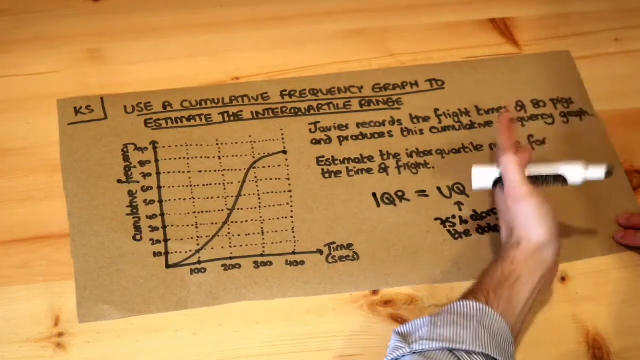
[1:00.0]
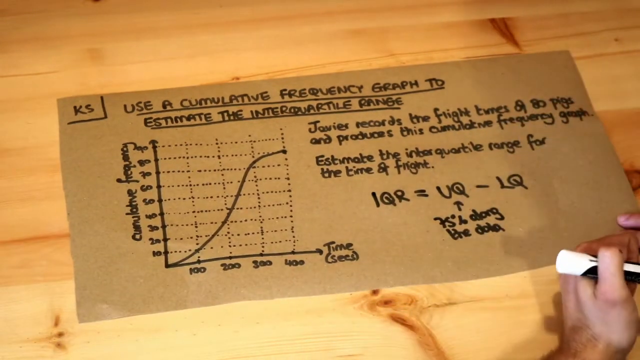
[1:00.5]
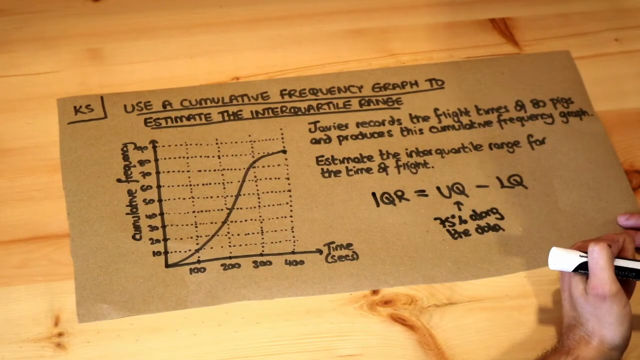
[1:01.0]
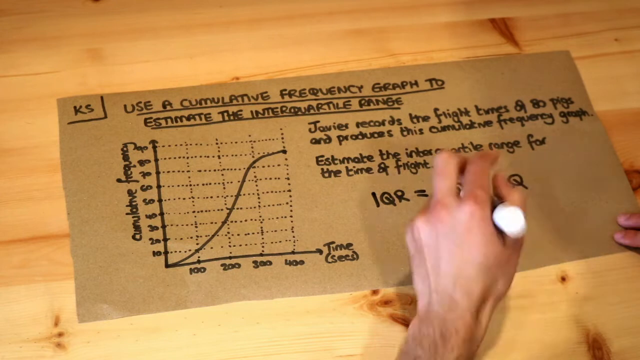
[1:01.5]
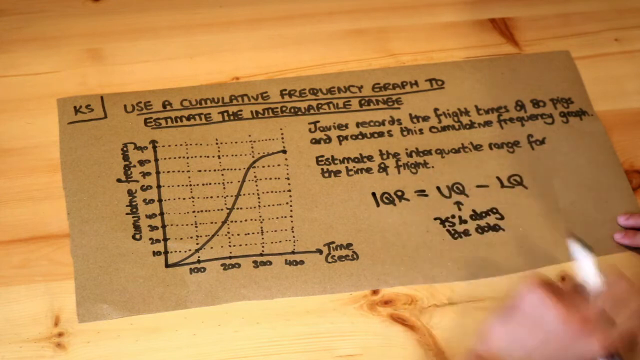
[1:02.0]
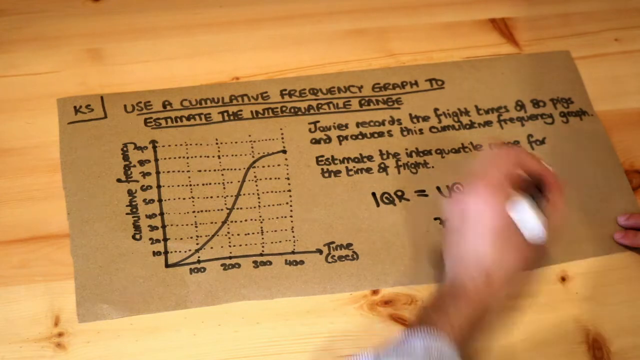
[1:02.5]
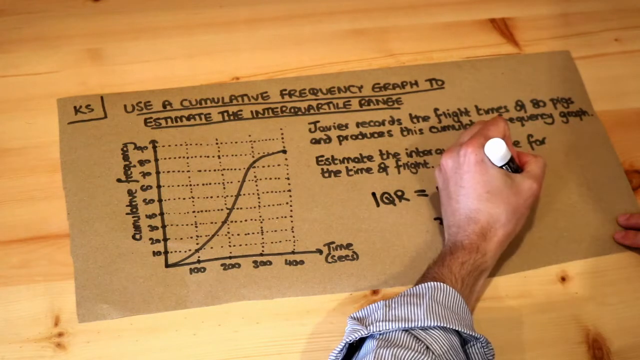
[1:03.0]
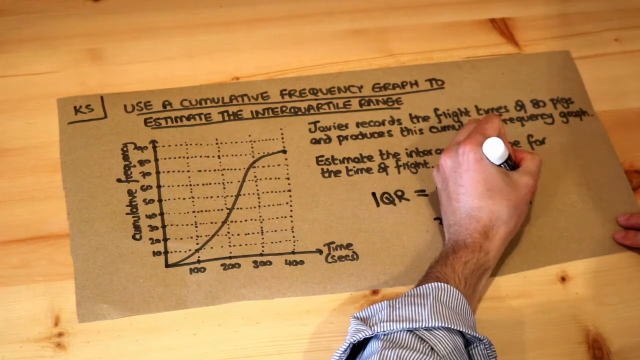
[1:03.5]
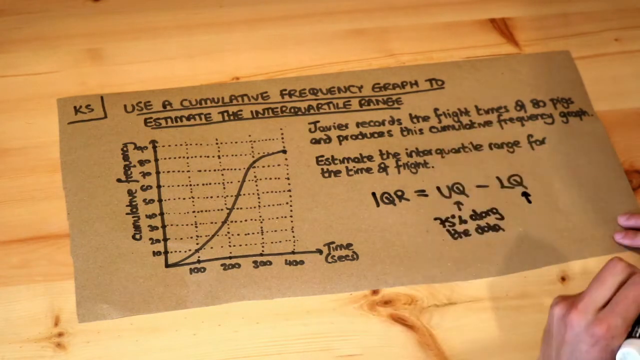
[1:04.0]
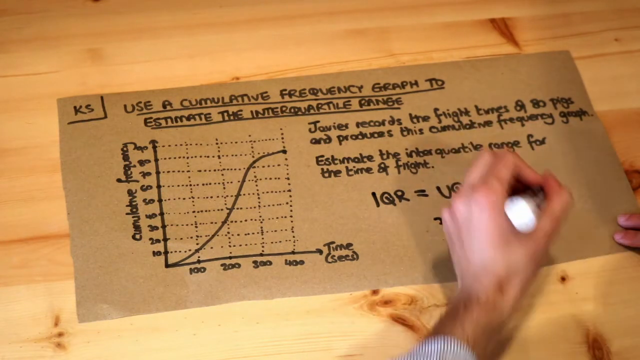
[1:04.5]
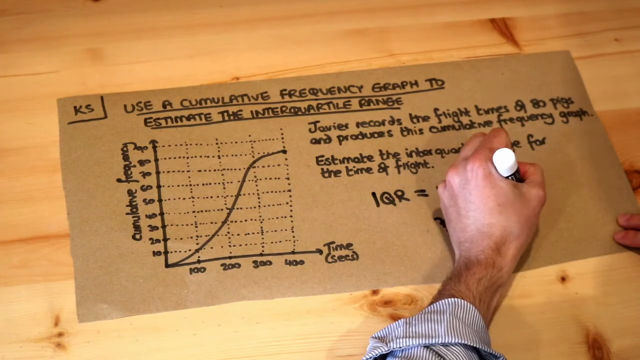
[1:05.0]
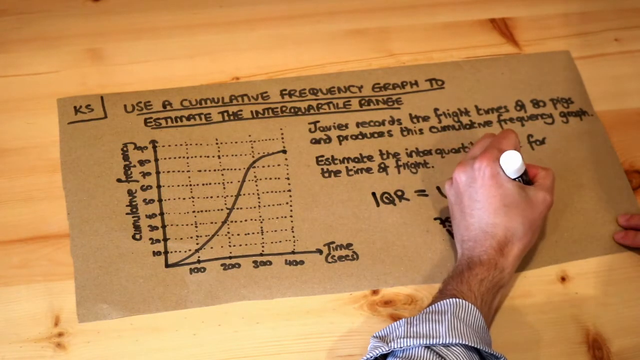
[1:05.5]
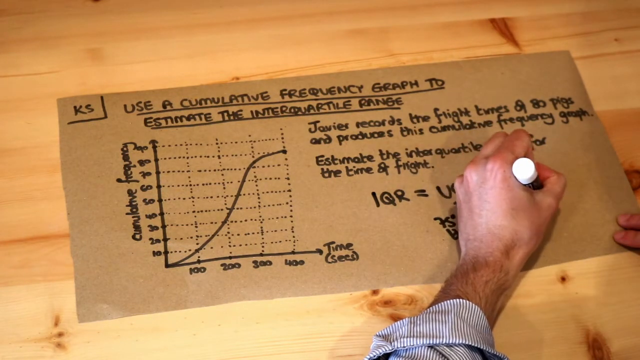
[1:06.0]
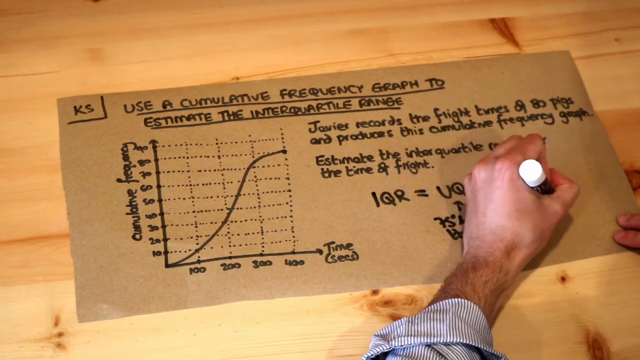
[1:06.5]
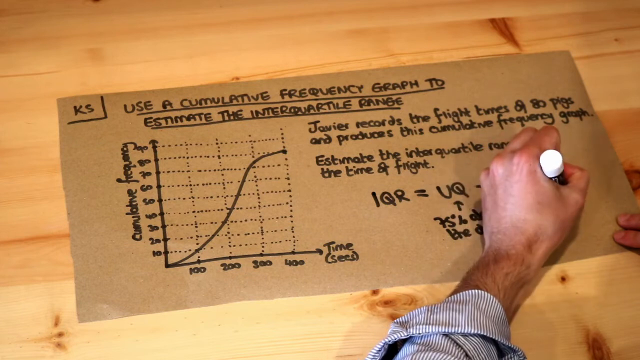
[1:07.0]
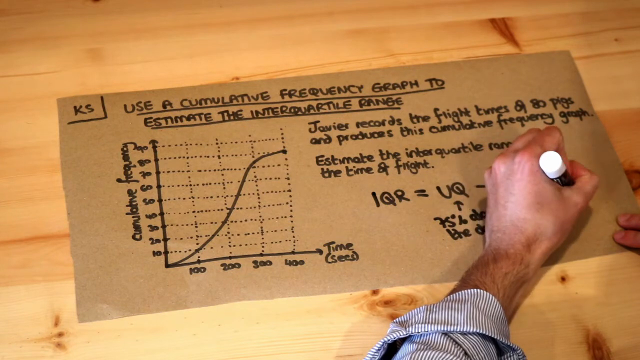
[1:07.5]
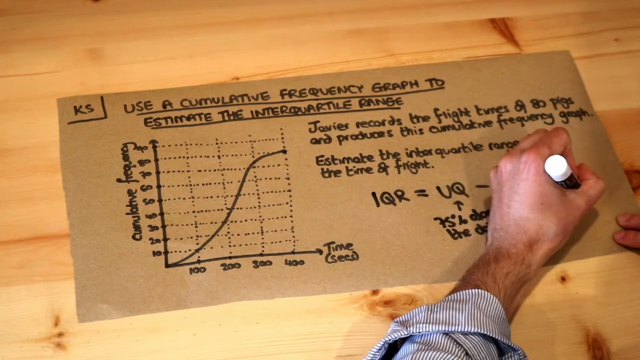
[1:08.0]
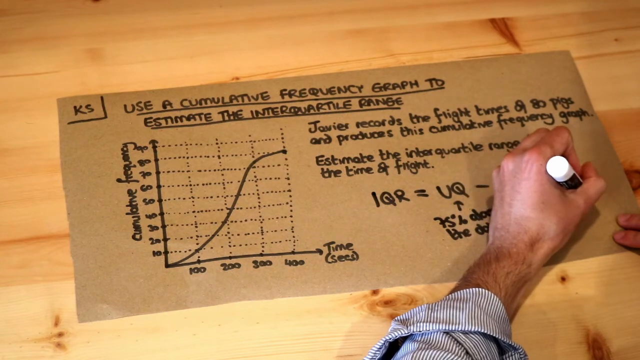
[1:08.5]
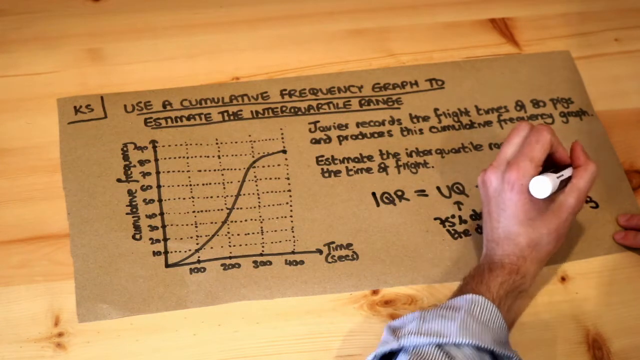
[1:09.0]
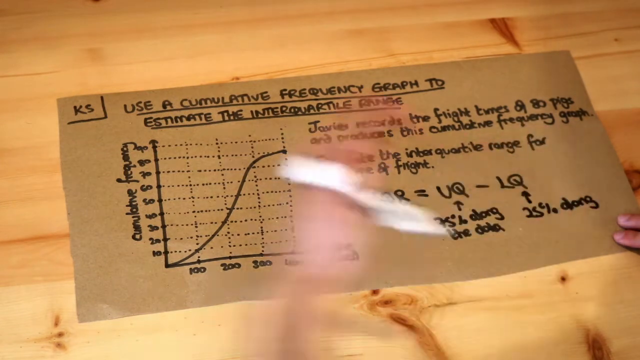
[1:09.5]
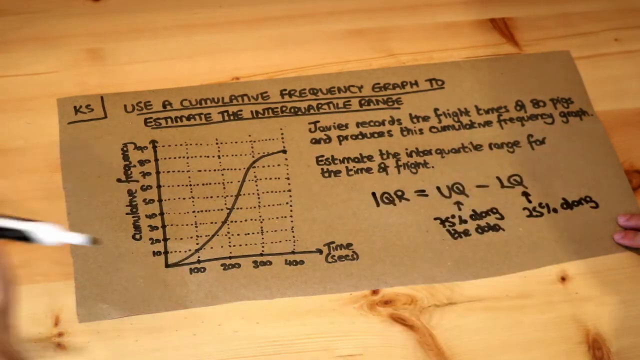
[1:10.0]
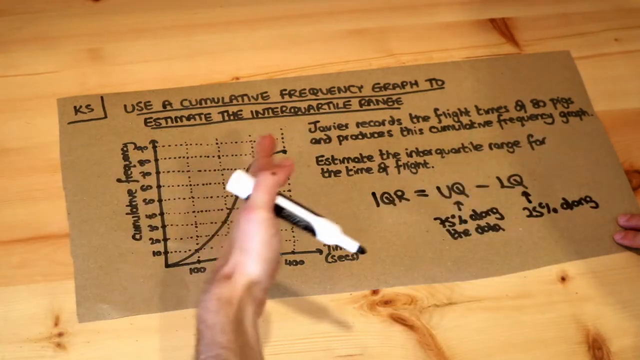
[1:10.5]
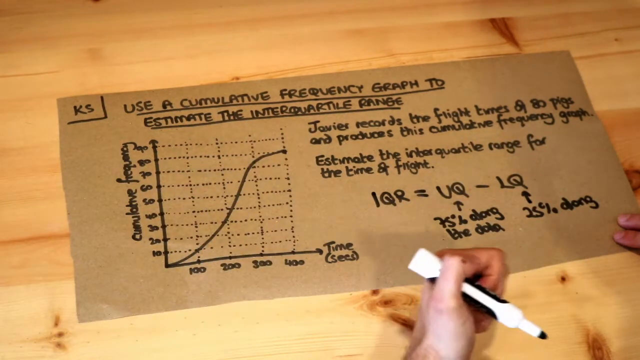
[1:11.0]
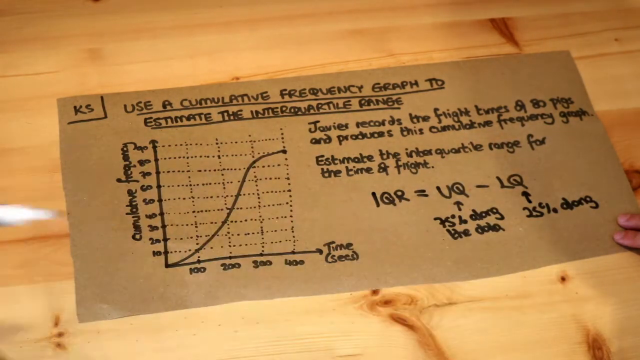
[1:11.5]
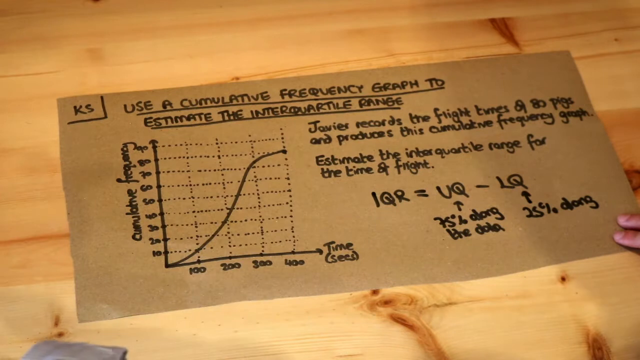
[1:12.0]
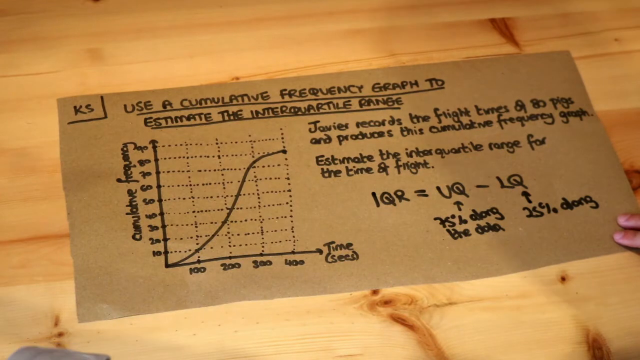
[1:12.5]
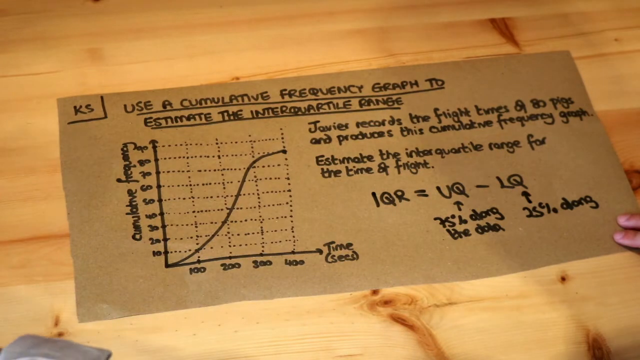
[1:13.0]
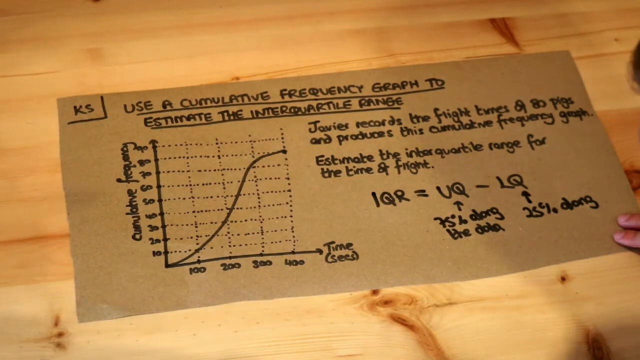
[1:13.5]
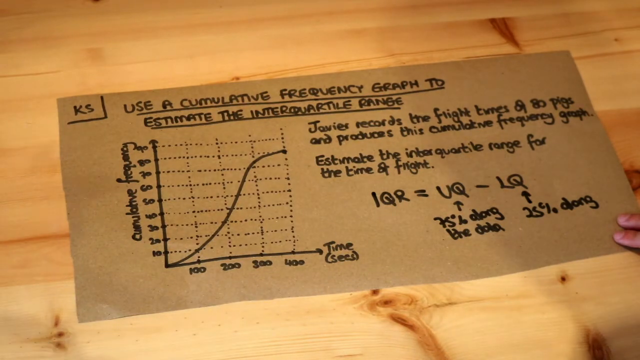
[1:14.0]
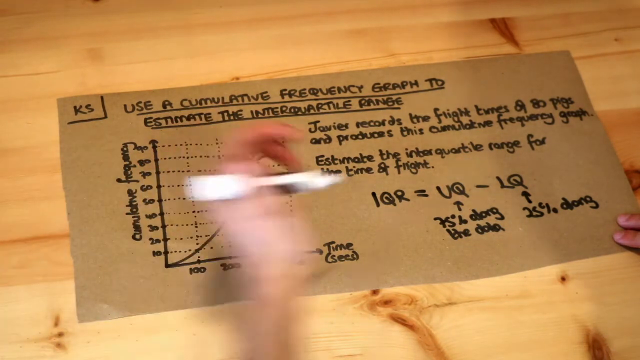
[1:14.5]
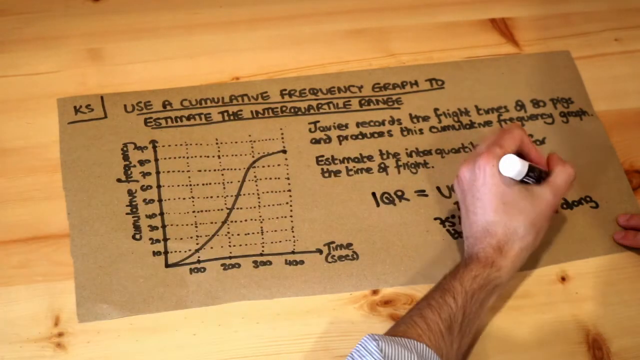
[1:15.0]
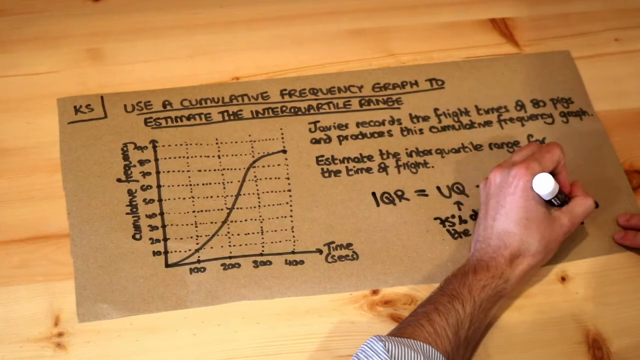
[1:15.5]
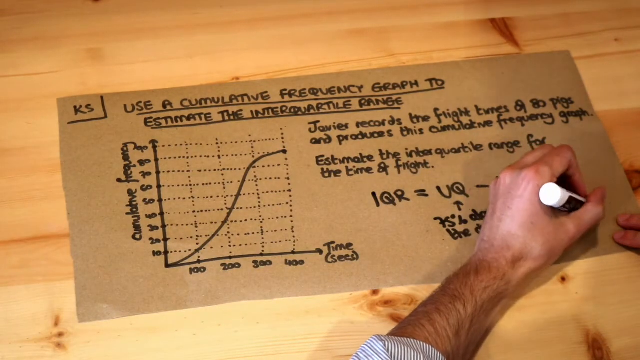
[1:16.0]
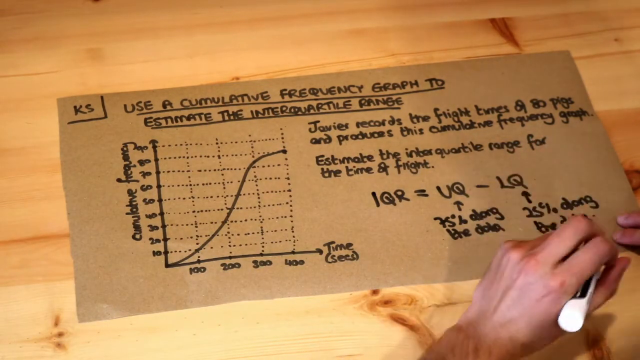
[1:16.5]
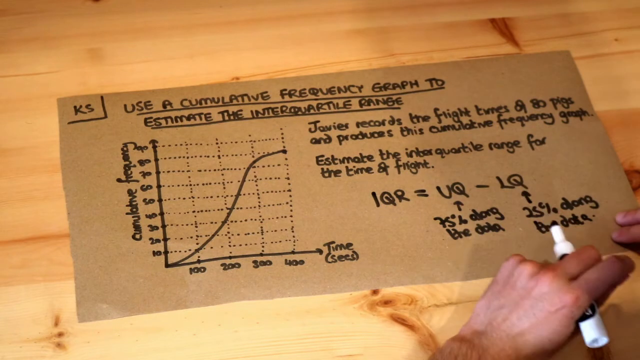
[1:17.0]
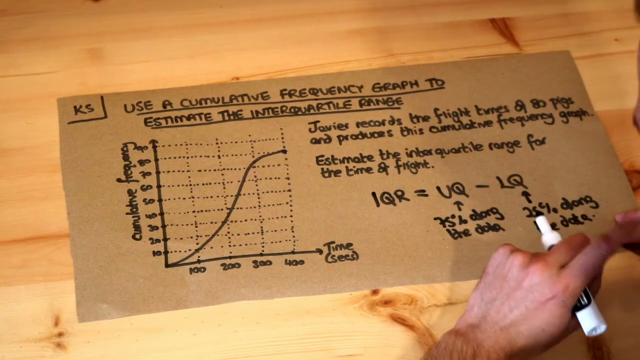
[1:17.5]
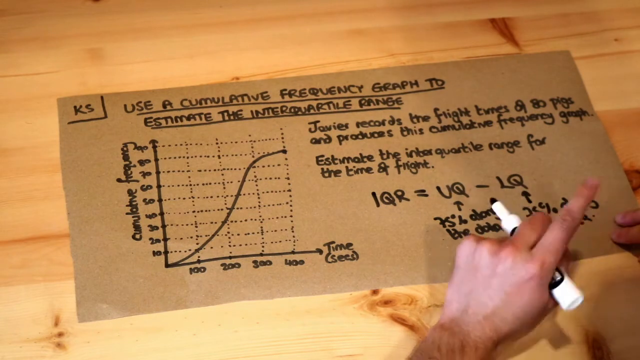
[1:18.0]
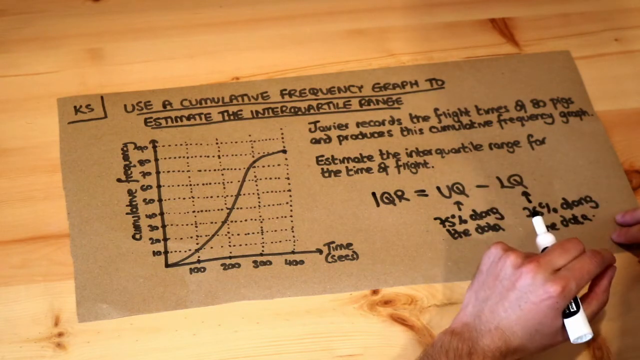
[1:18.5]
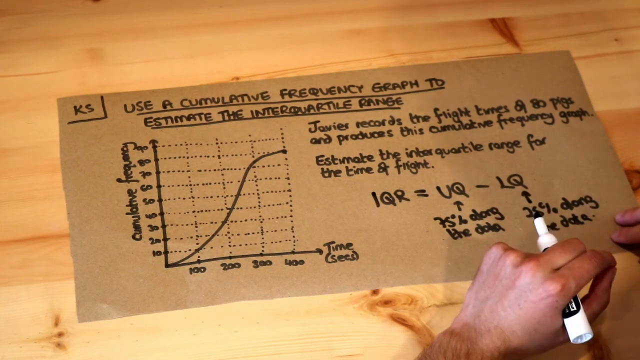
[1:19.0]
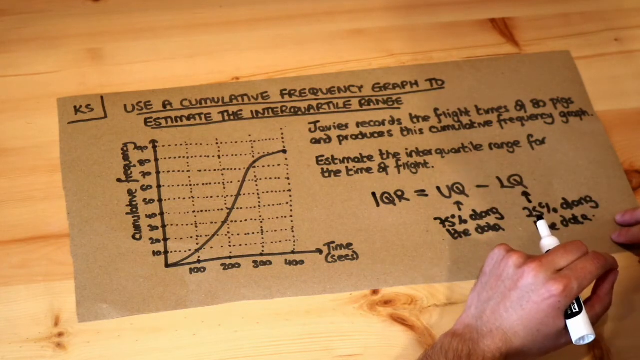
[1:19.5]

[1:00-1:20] A man is creating a graph and some writing on a cut-out piece of cardboard with raw edges. At the top it says "use a cumulative frequency graph to estimate the interquartile range." The graph shows a curved line that increases from left to right, with time as the bottom measurement and cumulative frequency as the side measurement. Holding a marker, he has written two sentences about the graph and, underneath, the equation "1qr equals uq minus lq." He has drawn an arrow with "75 percent" and something about data, then draws another arrow to the last part and writes something else, apparently beginning "25 percent"; it is very hard to read and is on the very edge. The cardboard is on a piece of wood, and he holds down its edge with the fingers of his right hand; the whole hand is not visible, only the fingers.